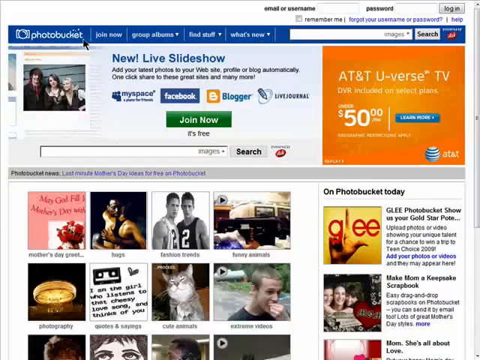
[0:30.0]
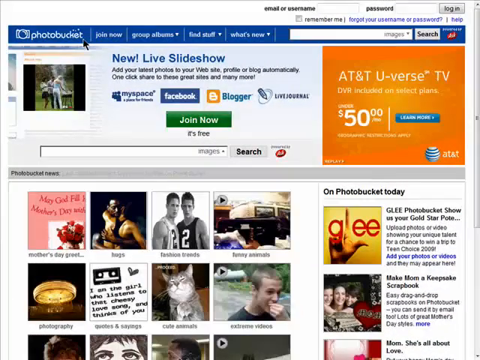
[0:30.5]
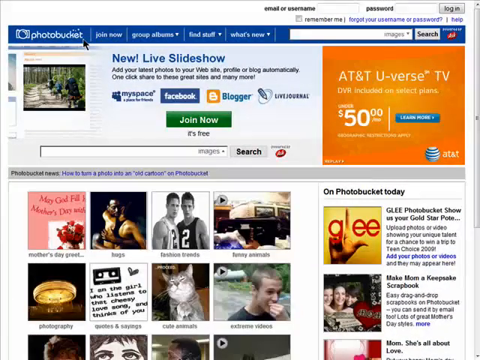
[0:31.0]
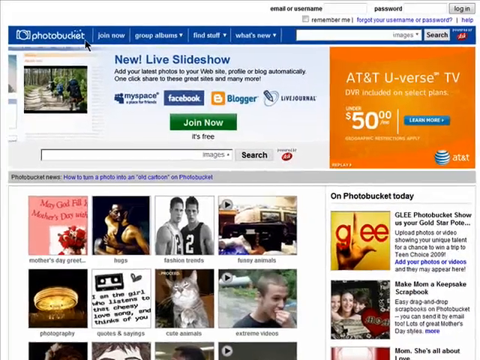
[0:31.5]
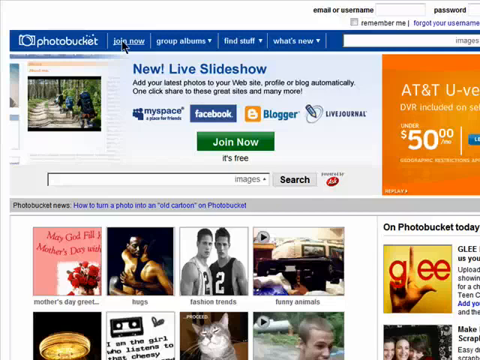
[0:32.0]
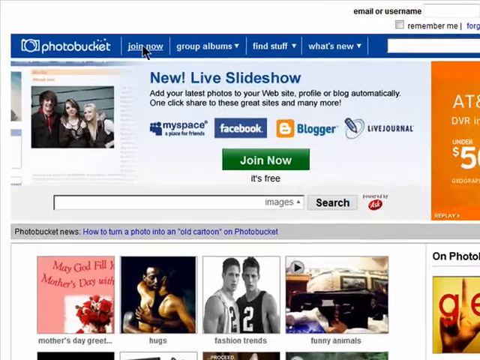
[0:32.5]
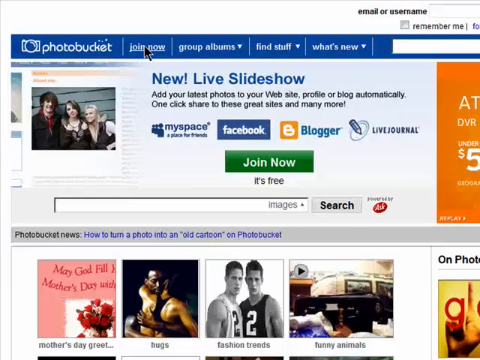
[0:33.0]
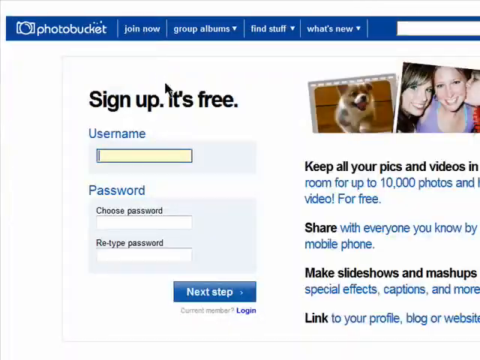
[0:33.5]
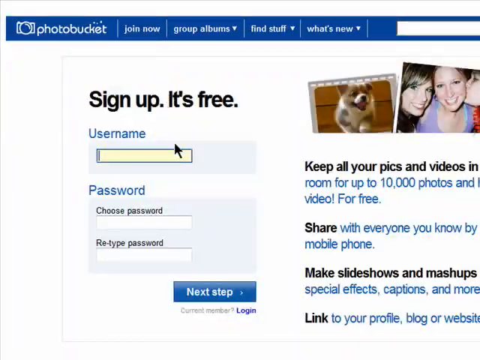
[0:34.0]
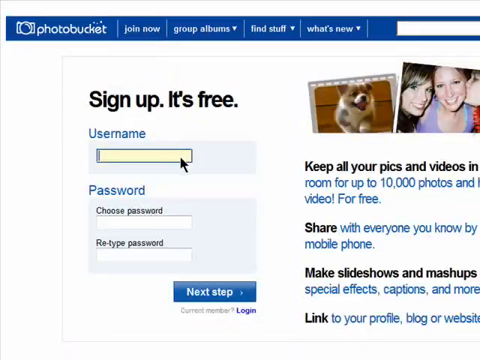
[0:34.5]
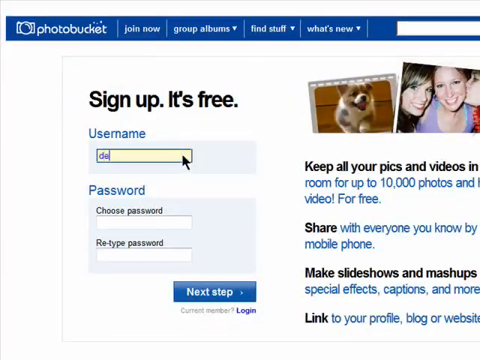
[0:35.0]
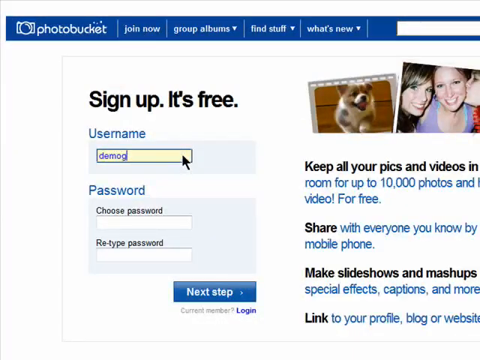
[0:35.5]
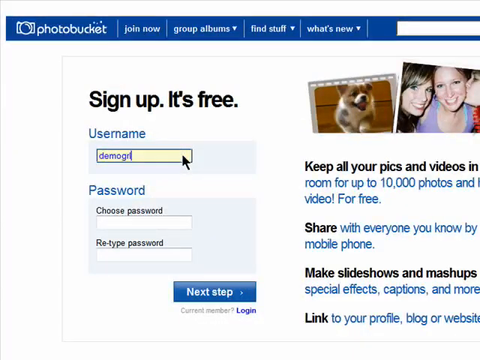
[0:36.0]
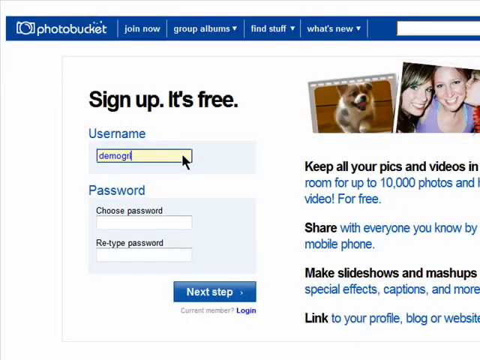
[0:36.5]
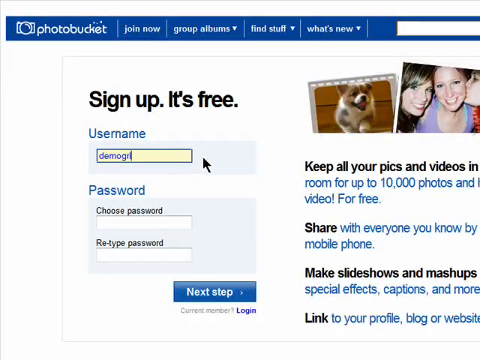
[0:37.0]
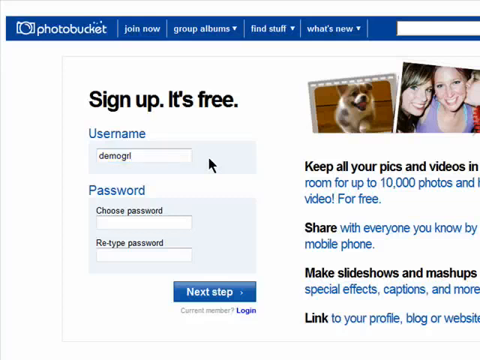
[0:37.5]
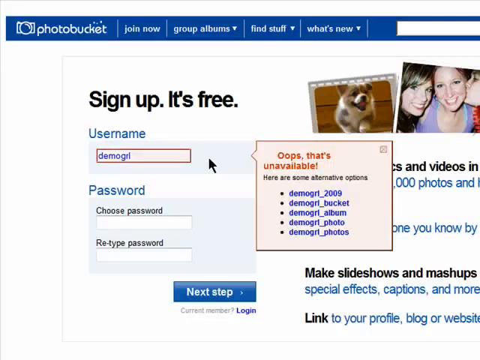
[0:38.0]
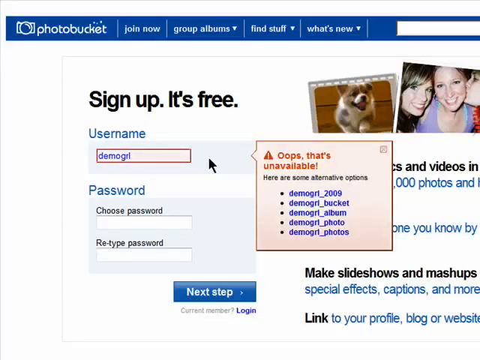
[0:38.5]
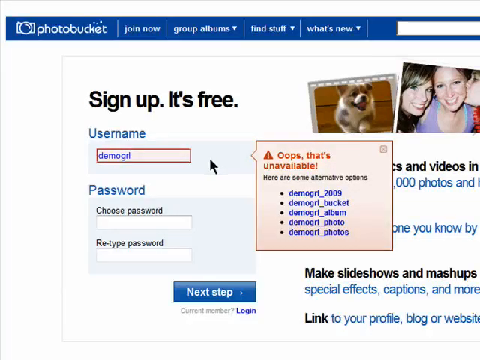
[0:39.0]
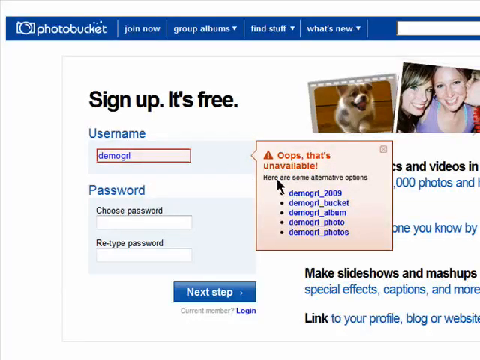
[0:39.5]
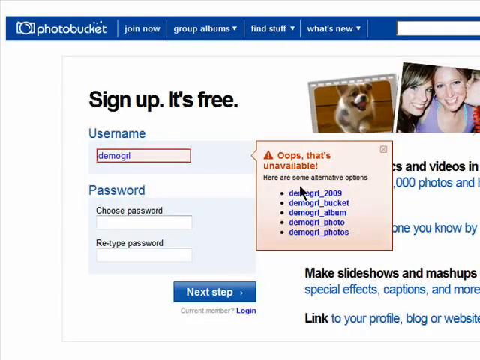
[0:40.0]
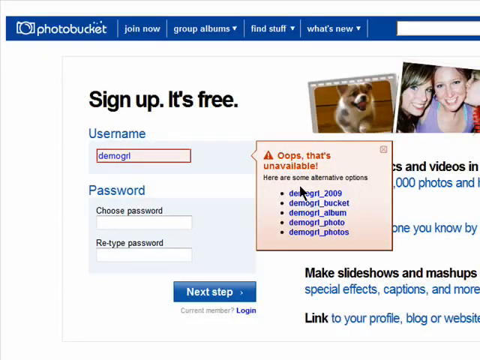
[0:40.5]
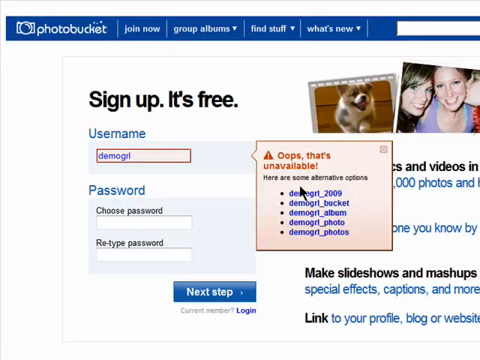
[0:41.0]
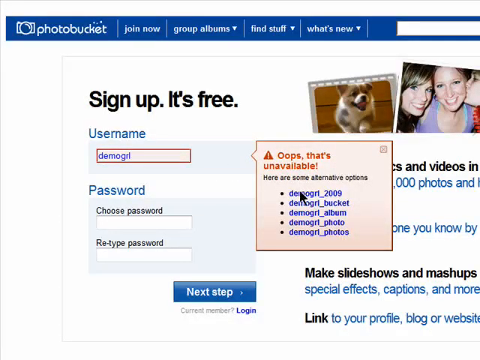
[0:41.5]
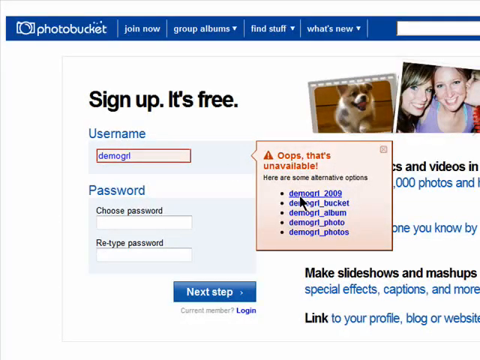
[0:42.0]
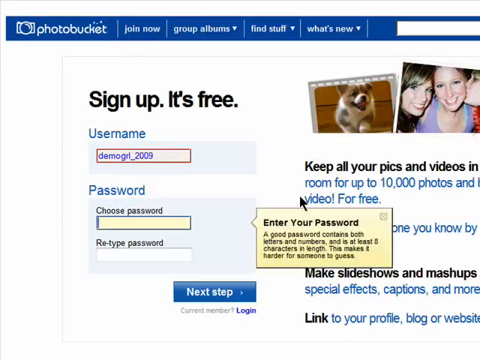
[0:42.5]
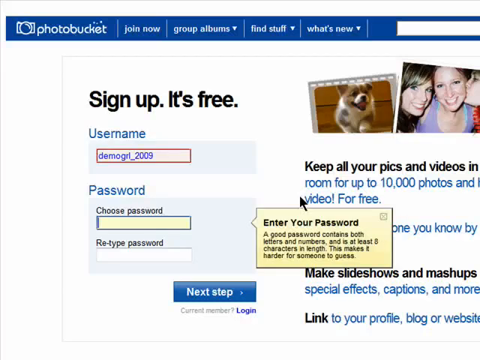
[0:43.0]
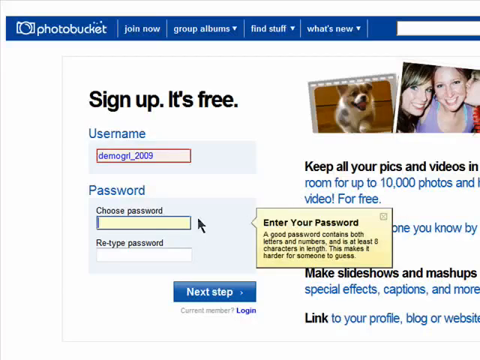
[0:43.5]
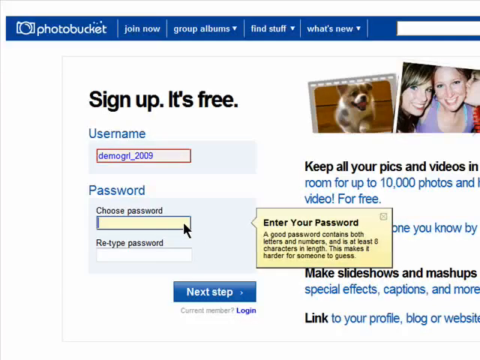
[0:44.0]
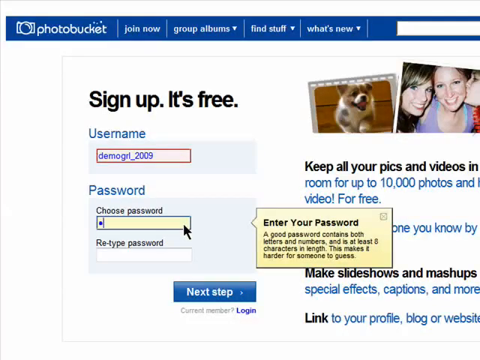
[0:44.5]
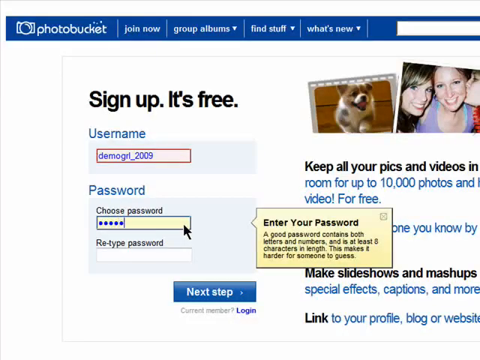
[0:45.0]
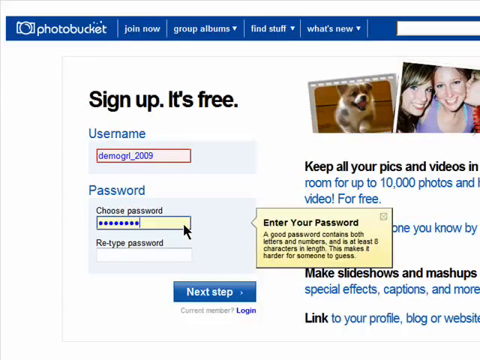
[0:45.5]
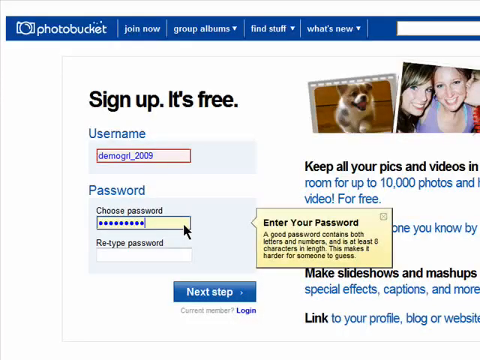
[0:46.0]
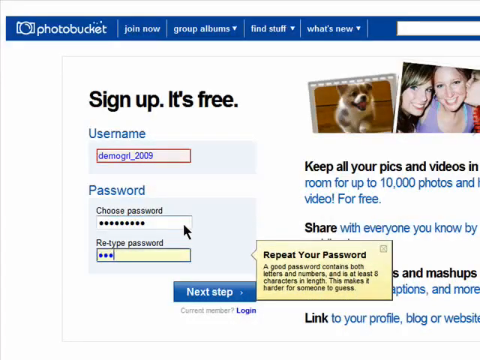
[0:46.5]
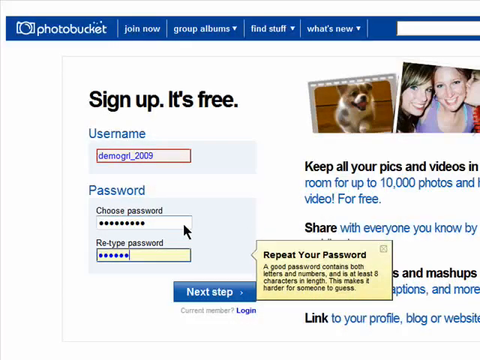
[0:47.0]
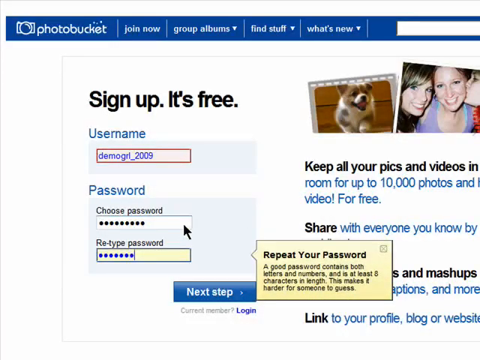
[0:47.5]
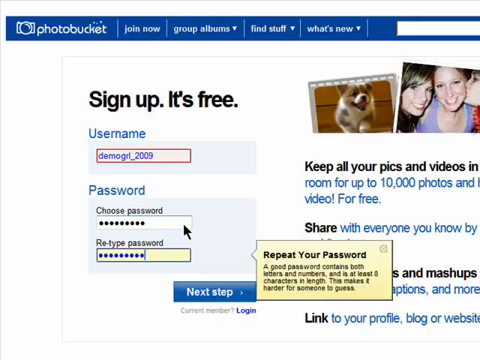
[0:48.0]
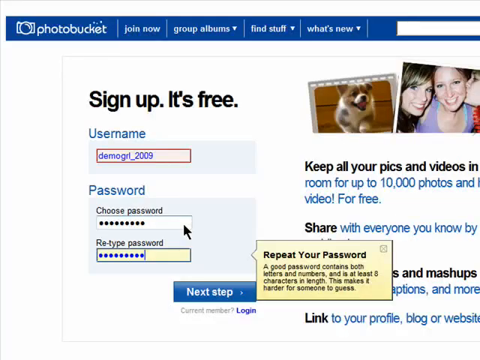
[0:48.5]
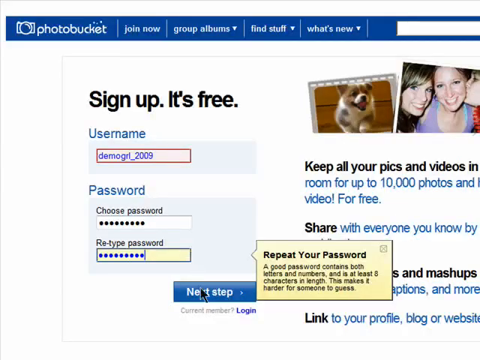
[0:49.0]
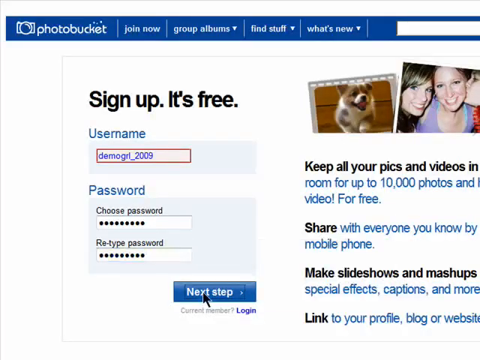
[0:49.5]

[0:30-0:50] The Photobucket website is on screen, with photos at the bottom and categories such as Mother's Day, greetings, hugs, fashion trends, animals, extreme videos, cute animals, quotes and sayings, and photography. Text at the top reads "join now," "group albums," "find stuff," and "what's new." A banner says "new live slideshow. Add your latest photos to your website, profile or blog automatically. One click share to these great sites and many more," with MySpace, Facebook, Blogger, and LiveJournal among the sites. A news section says "on Photobucket today" with "Glee Photobucket show us your gold star" and "make mom a keepsake scrapbook." An advertisement for AT&T U-verse TV reads "DVR included on select plans for under $50." The view zooms in and goes to a join now button, and a screen appears saying "sign up, it's free." The user types in the username "demo" and "g-r-l," but a message says "oops, that's unavailable. Here are some alternative options": "demo girl_2009," "demo girl_bucket," "demo girl_album," "demo girl_photo," and "demo girl_photos." The user clicks the first one and begins typing a password, where the text says "enter your password. A good password contains both letters and numbers." The user then clicks on the next step.